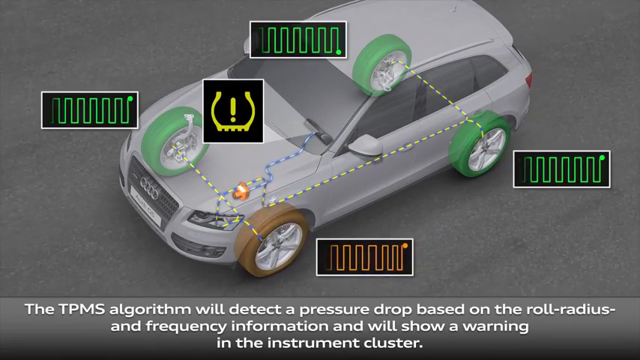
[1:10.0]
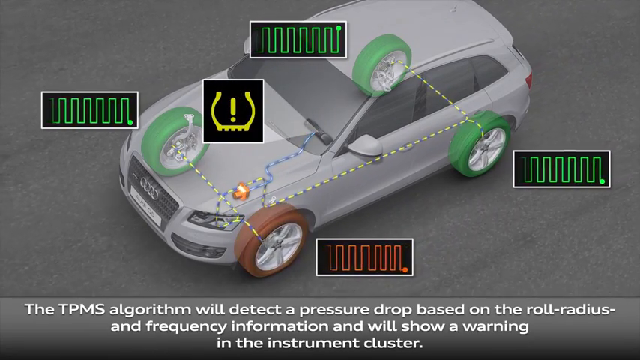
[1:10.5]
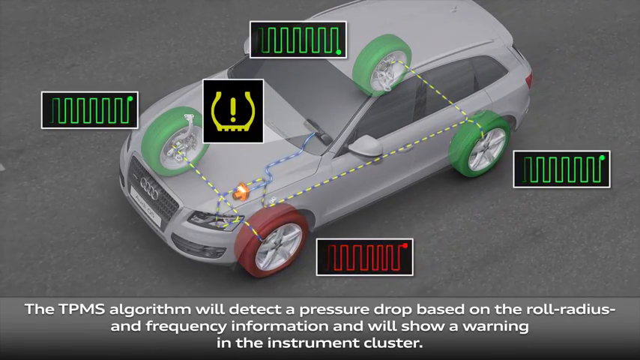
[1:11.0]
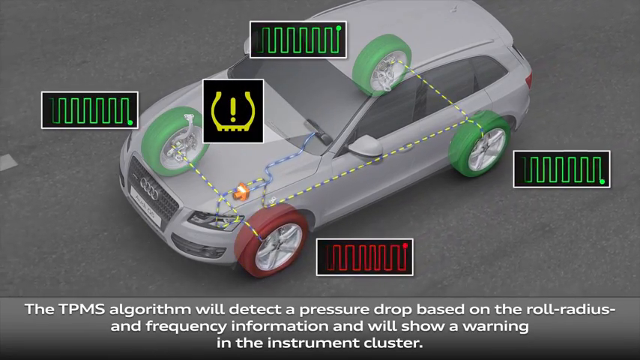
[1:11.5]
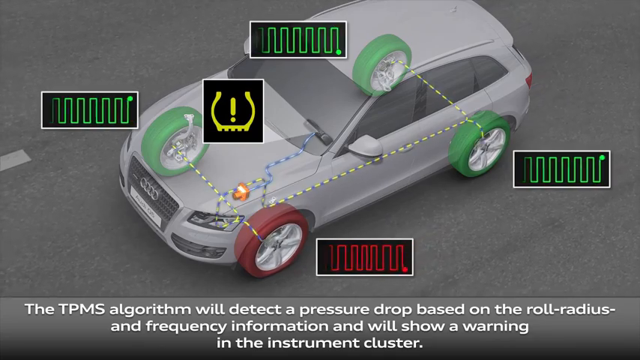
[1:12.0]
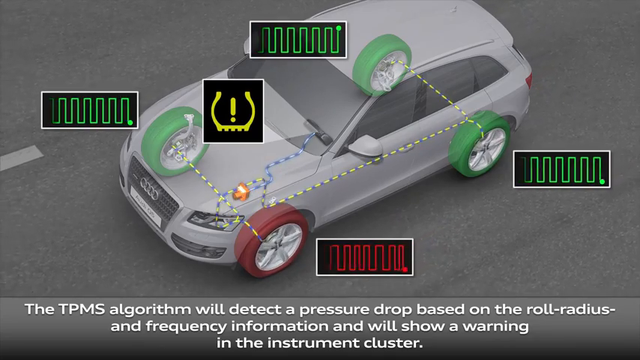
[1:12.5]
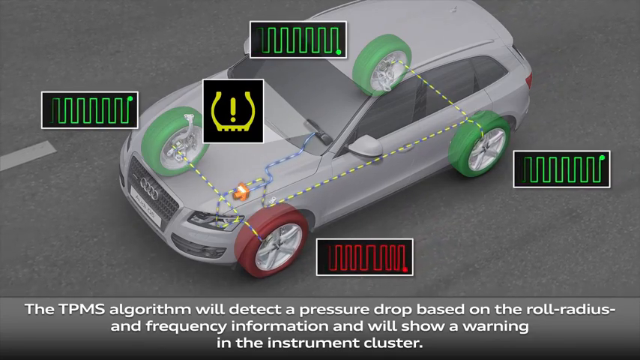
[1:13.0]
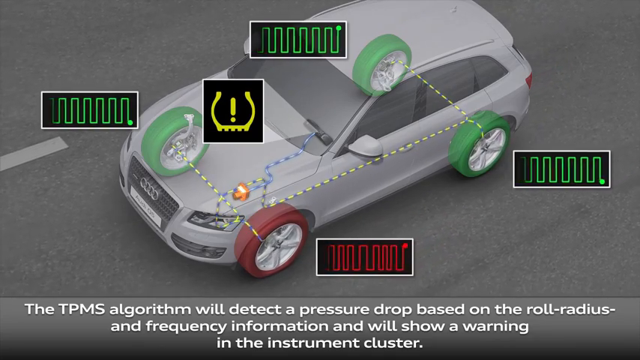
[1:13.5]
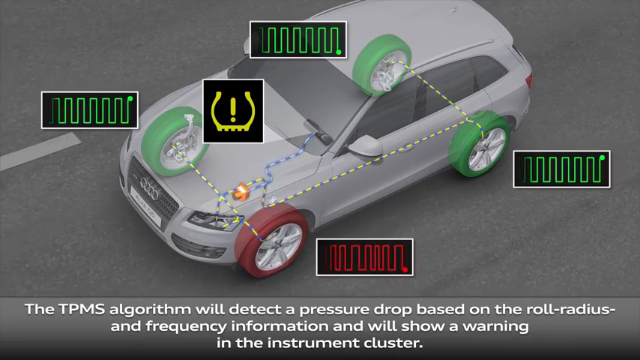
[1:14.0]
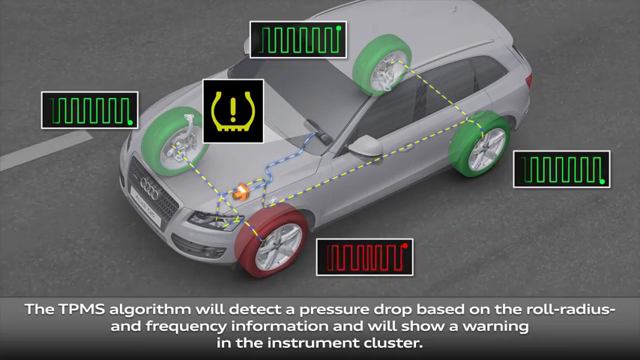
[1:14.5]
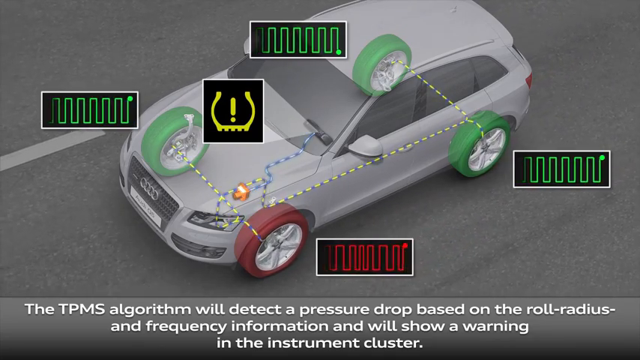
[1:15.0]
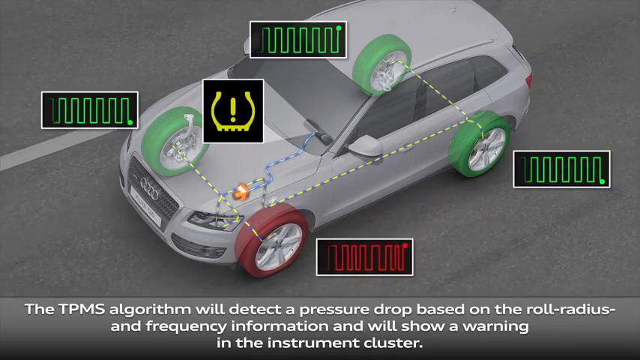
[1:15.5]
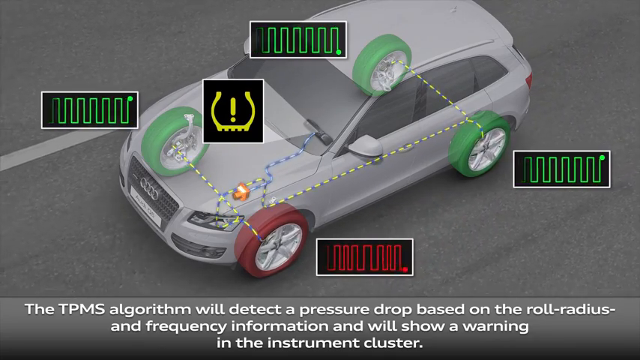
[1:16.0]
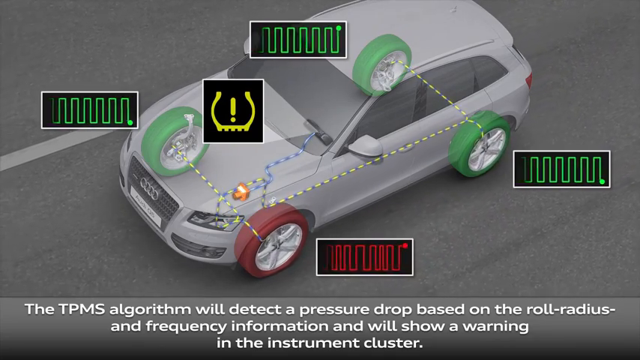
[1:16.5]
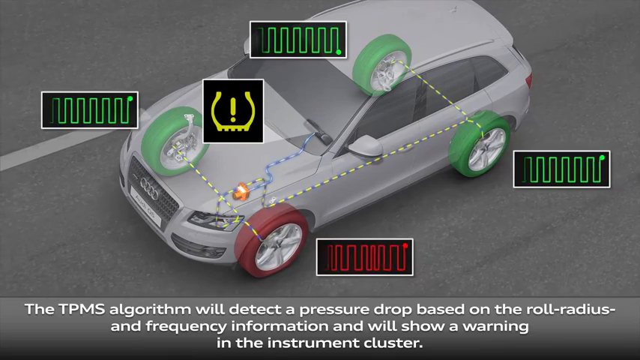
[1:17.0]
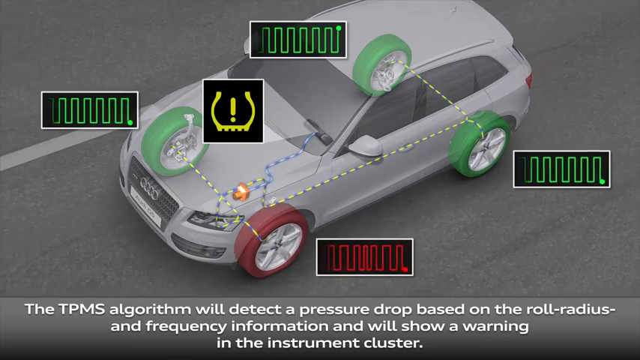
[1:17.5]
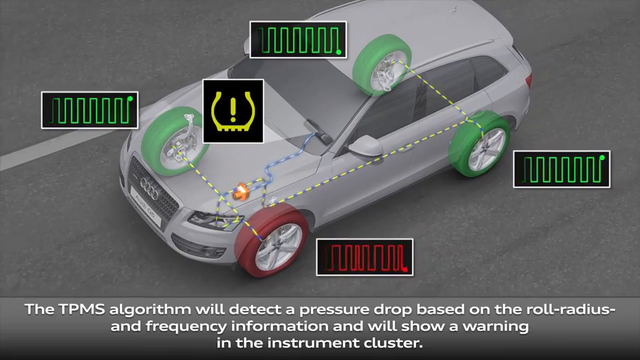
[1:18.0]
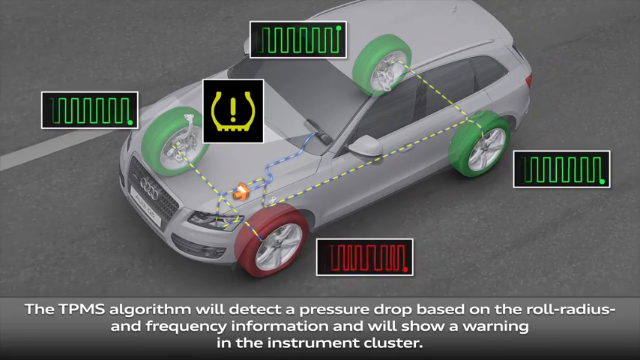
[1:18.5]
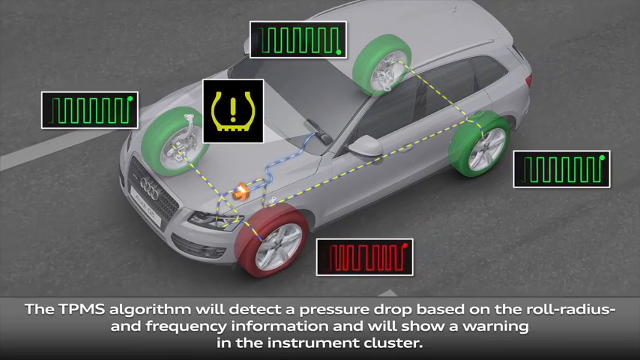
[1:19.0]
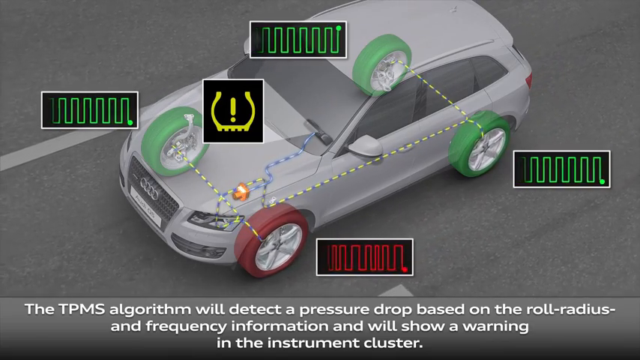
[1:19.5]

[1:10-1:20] The bottom indicator turns red as the exclamation point comes on. This bottom indicator is connected to the driver's front wheel on the left side, and that tire is now red while the other three tires are green. The text at the bottom changes to read: "the TPMS algorithm will detect a pressure drop based on the roll radius and frequency information and will show a warning in the instrument cluster."